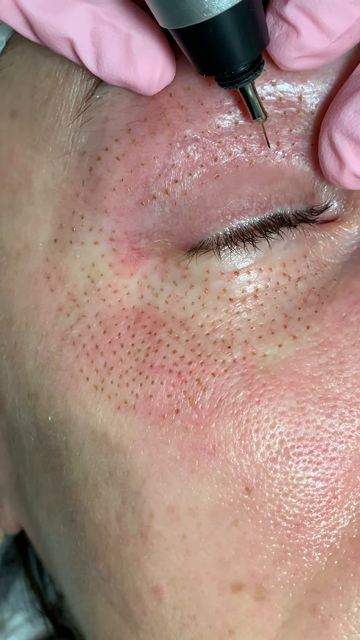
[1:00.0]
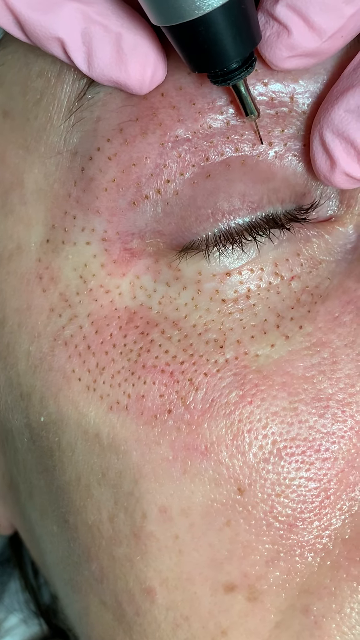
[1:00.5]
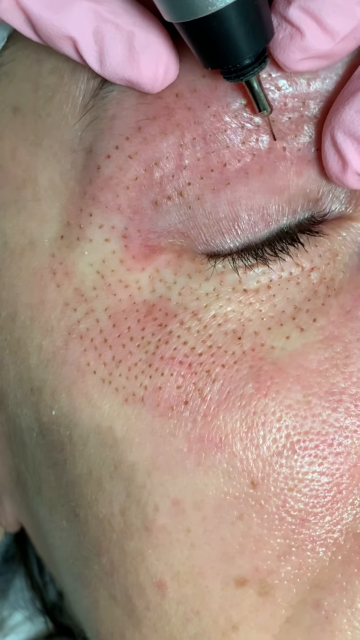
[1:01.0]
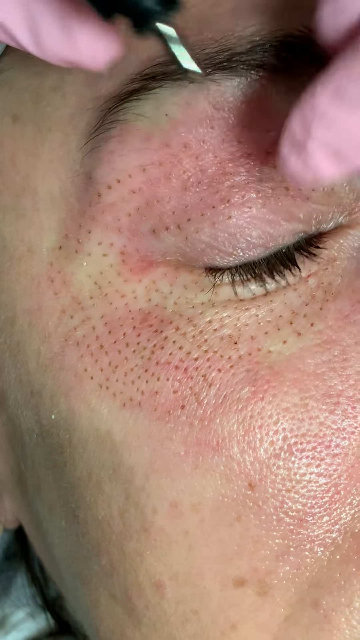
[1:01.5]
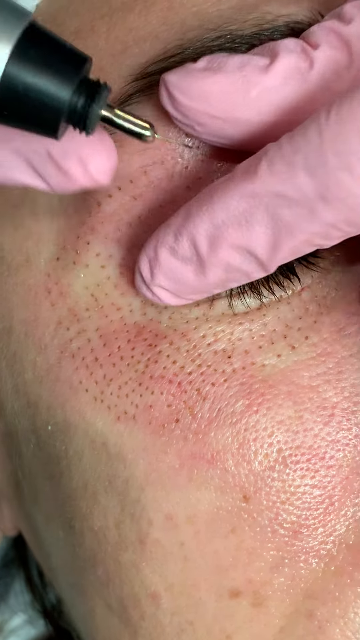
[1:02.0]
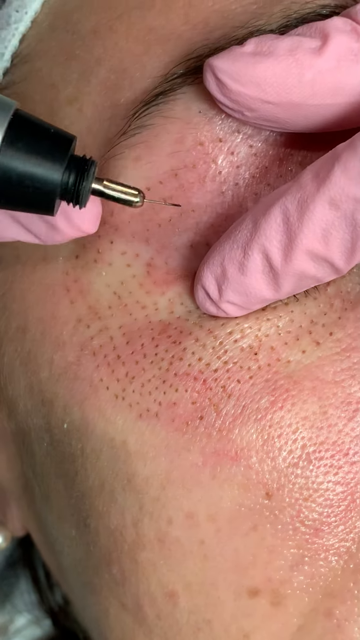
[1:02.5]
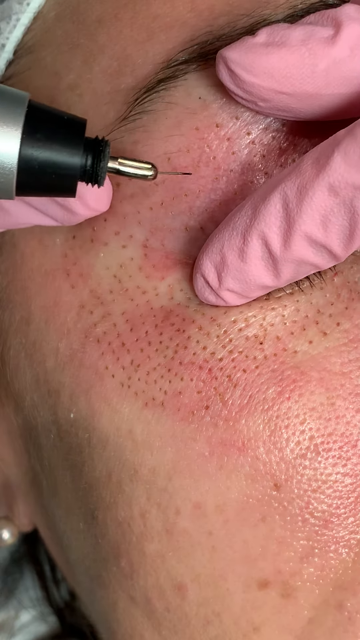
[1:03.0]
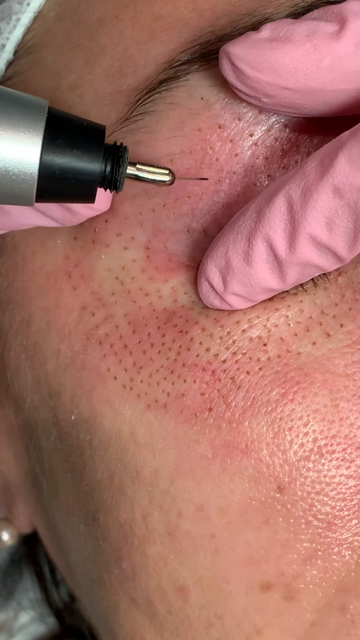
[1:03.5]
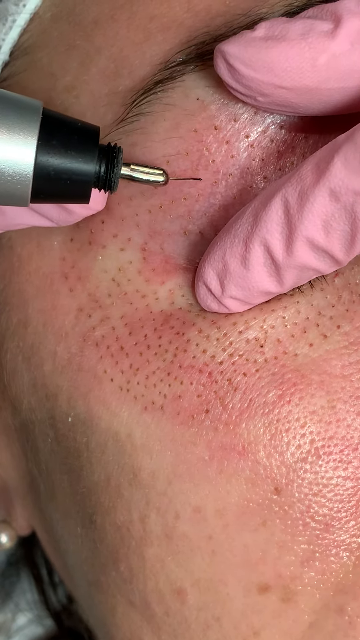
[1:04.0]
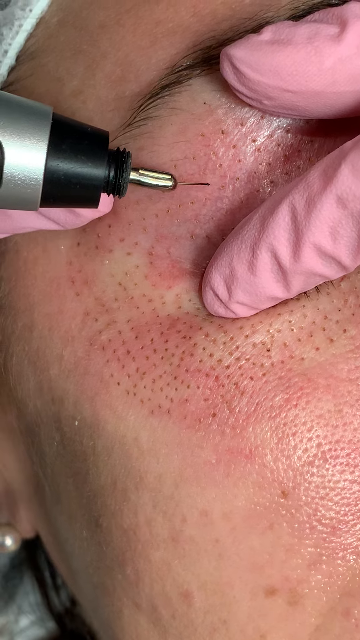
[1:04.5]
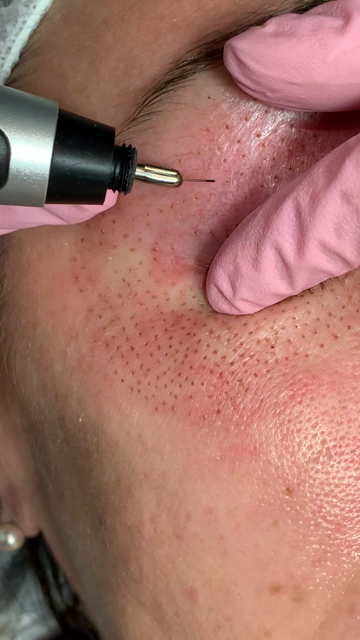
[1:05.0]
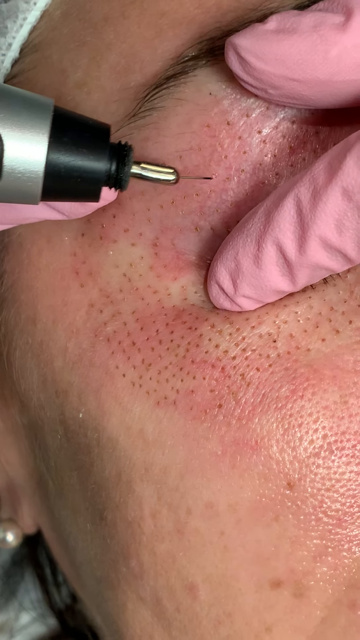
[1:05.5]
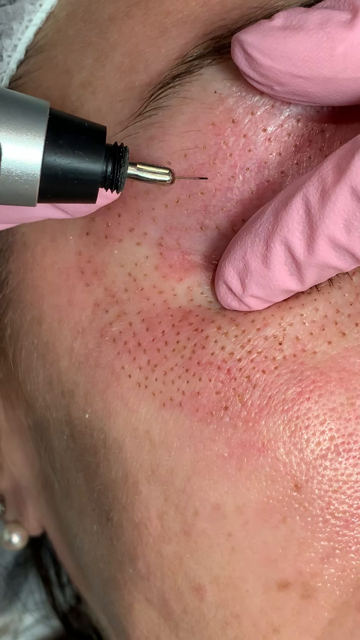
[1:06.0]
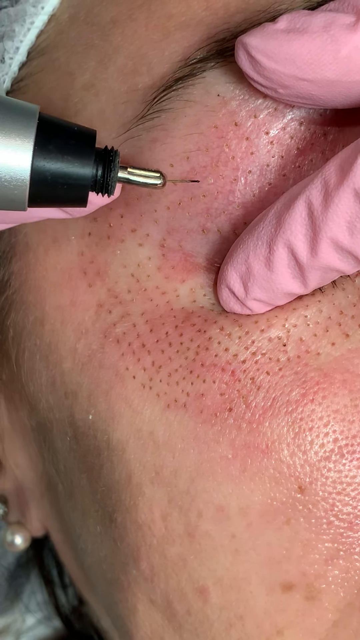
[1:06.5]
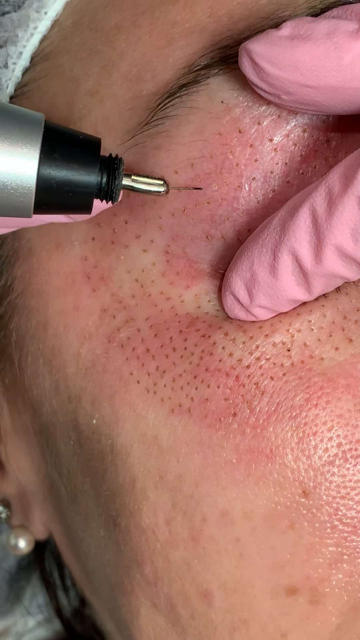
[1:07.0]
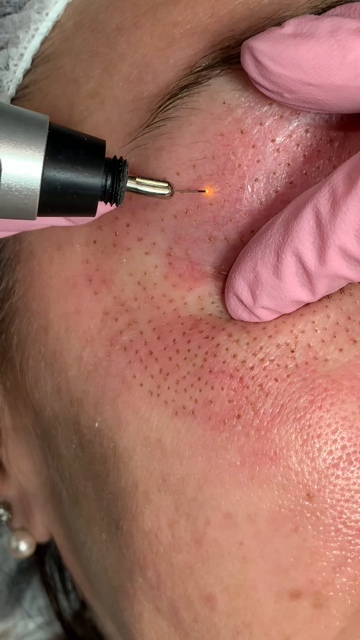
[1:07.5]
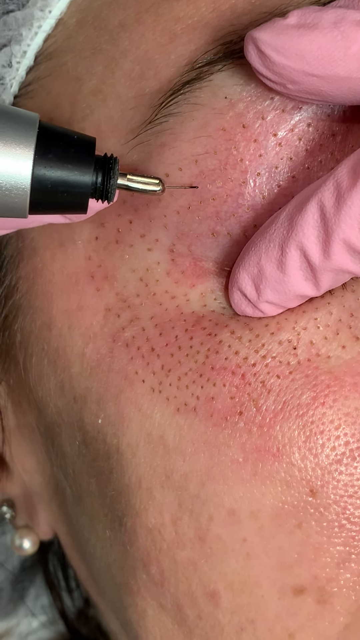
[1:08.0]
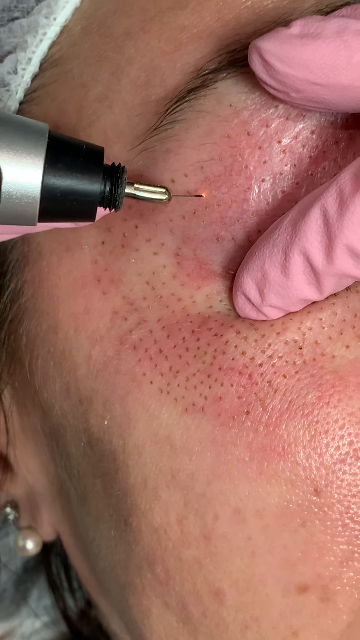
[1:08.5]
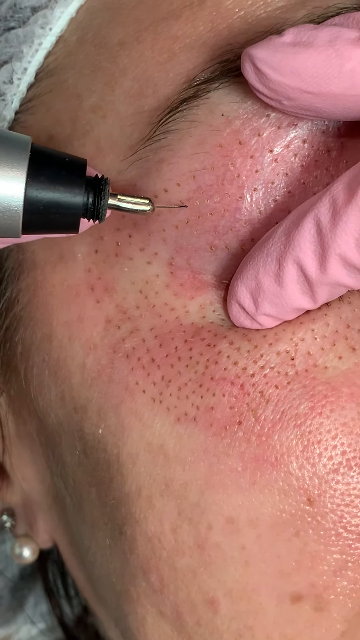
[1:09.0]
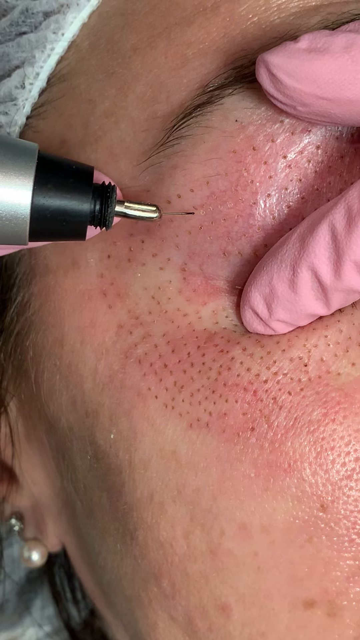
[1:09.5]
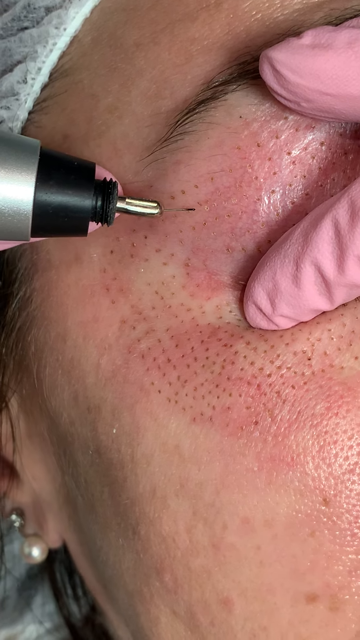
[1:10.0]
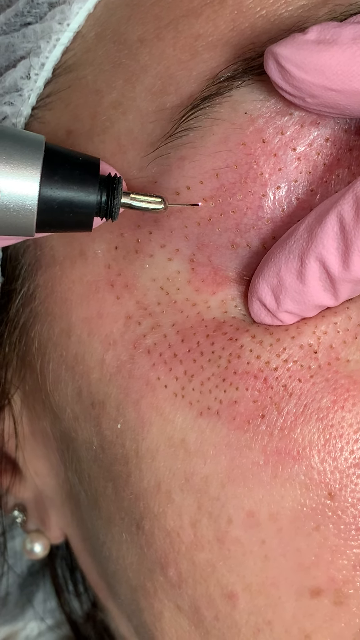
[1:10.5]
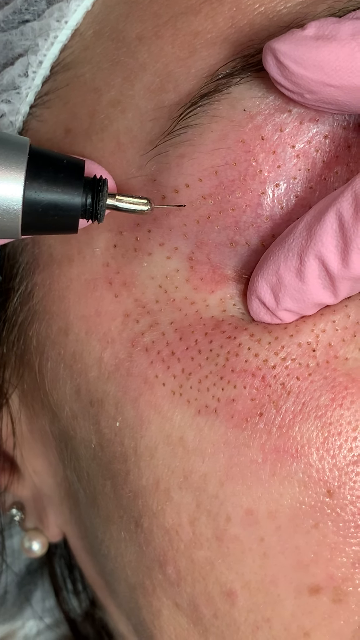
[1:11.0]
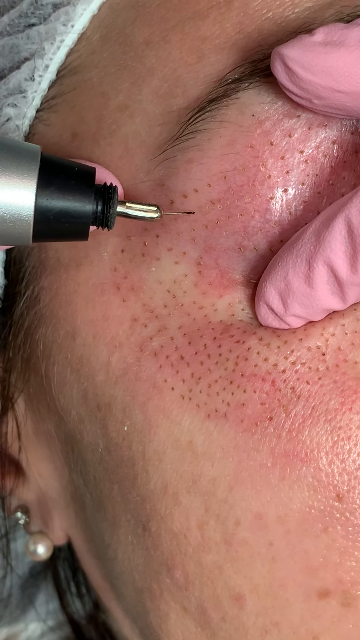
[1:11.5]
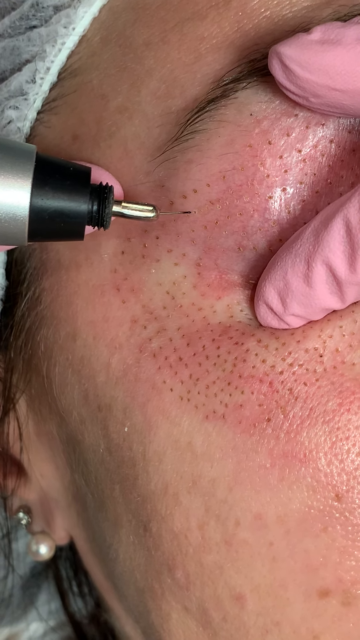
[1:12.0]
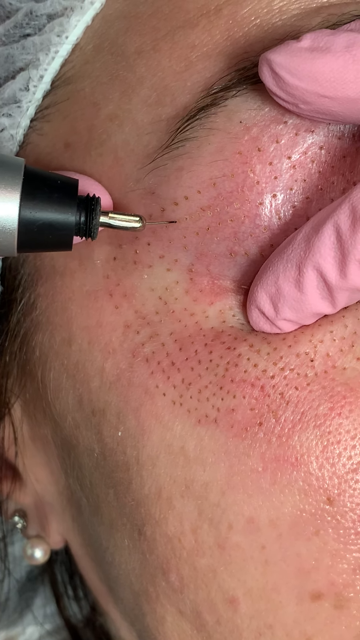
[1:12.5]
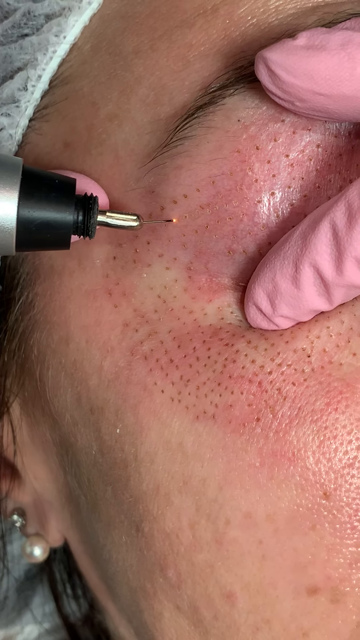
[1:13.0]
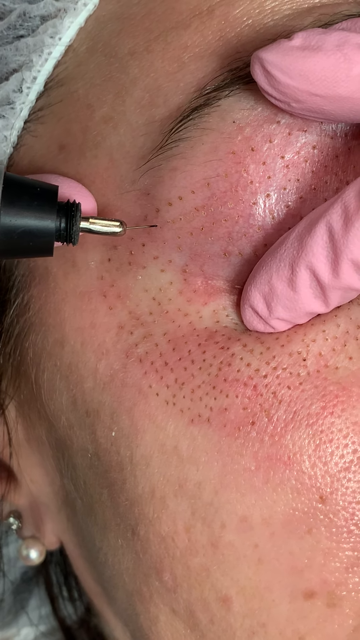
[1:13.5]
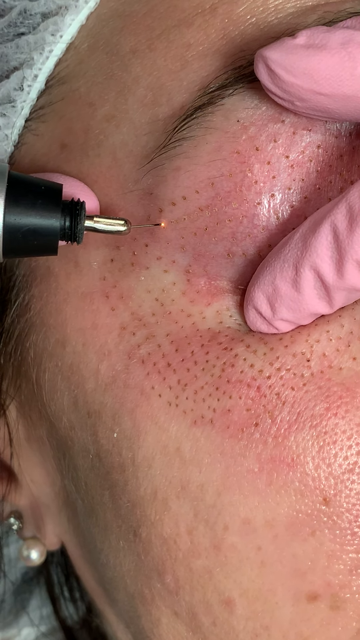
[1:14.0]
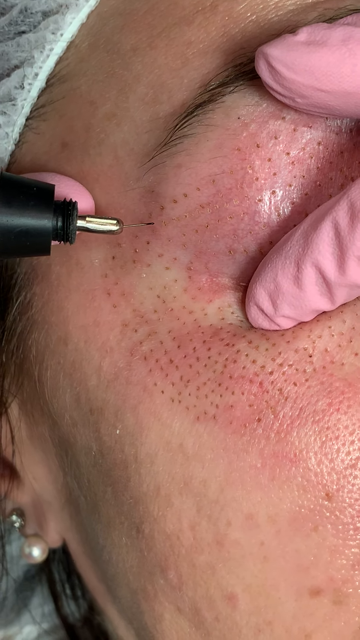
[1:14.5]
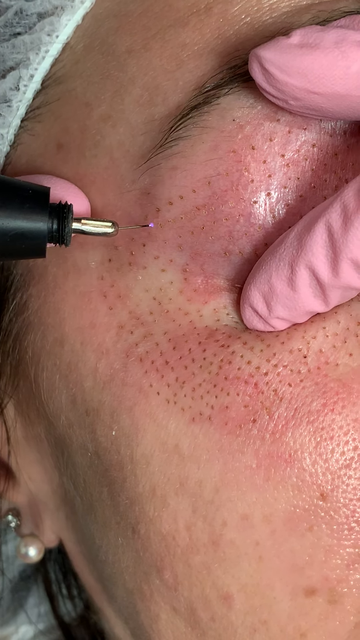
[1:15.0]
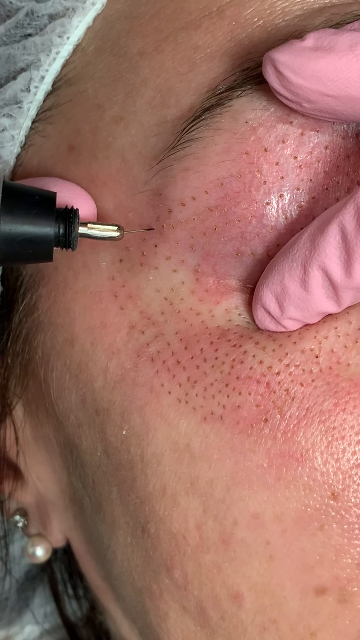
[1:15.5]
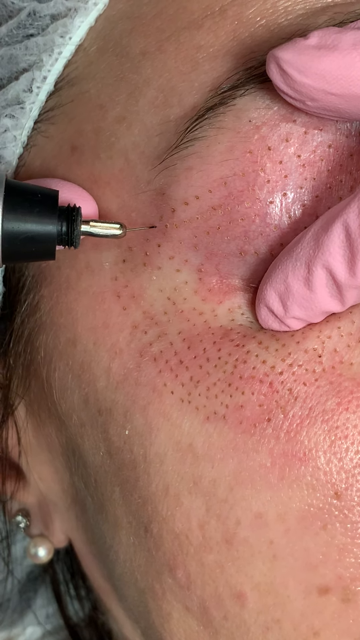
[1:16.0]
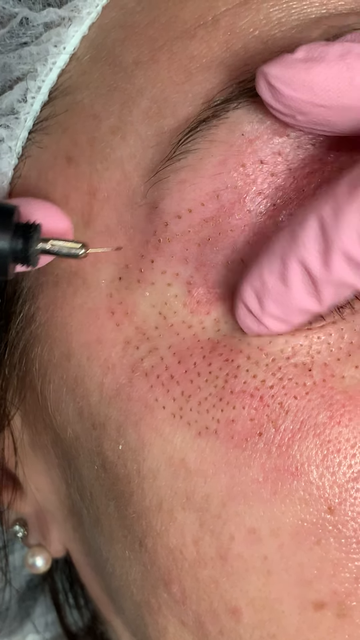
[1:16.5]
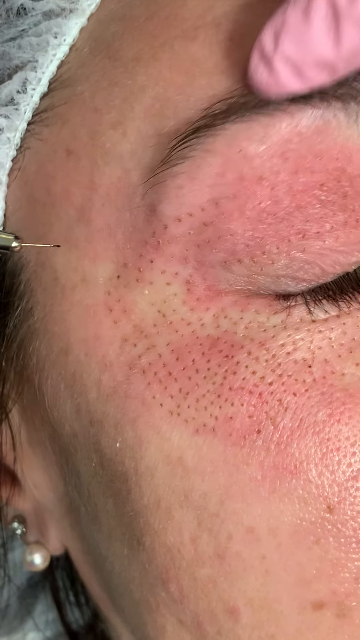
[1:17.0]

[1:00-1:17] An extreme close-up shows a woman's closed right eye and the area around it. The eyebrow is partly visible behind some pink gloved fingers. A series of brown dots surrounds the entire eye. The person working on the woman's skin holds an instrument with a silver metal band above a black tip, with a needle coming out from the tip. The hand moves across the eye area, and the woman squints slightly. The metal tip begins to be applied to the skin, and as it does, a small bright spark of light comes out of the end. Every time the spark hits the woman's skin, she flinches slightly. The left hand holds the eye skin taut while the right hand moves the metal instrument from right to left across the screen, directly above the woman's eye, marking the places as it goes.